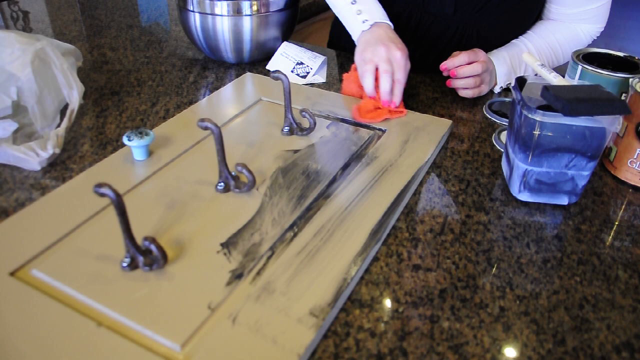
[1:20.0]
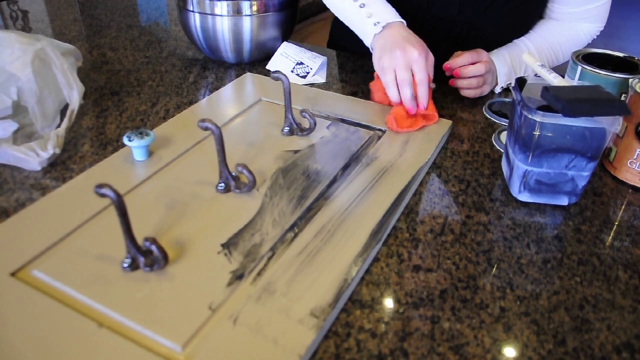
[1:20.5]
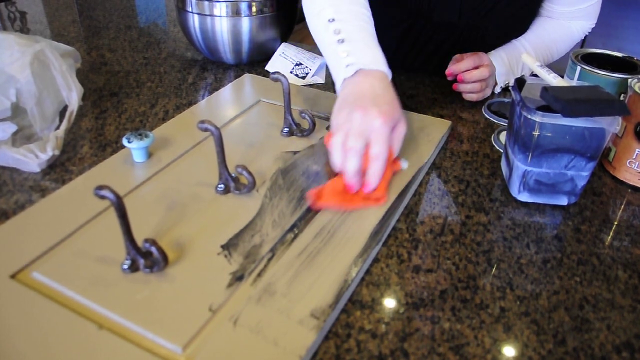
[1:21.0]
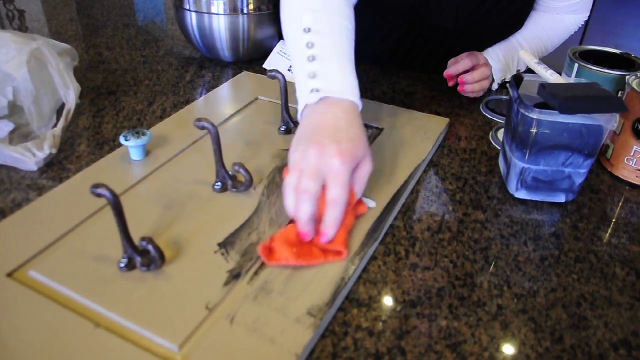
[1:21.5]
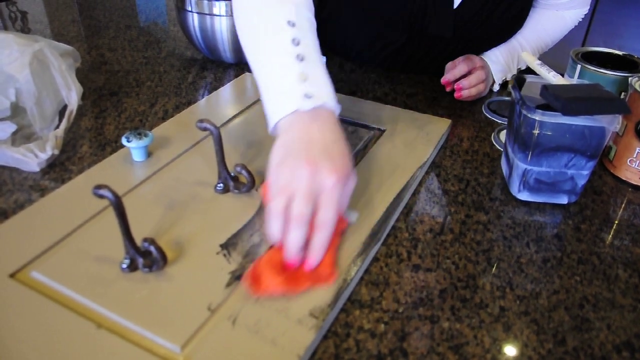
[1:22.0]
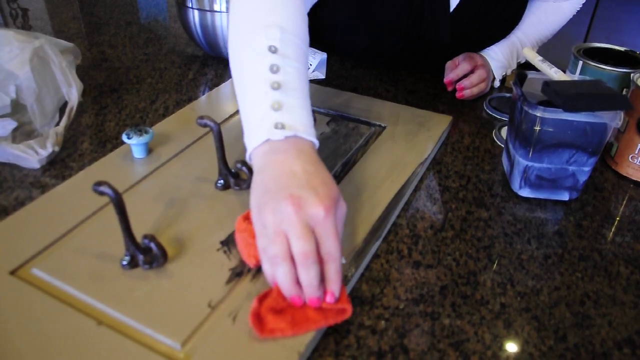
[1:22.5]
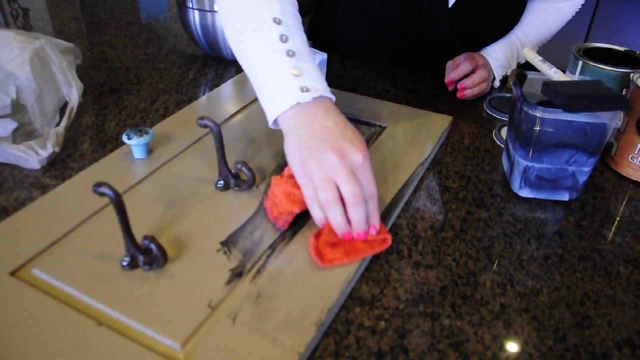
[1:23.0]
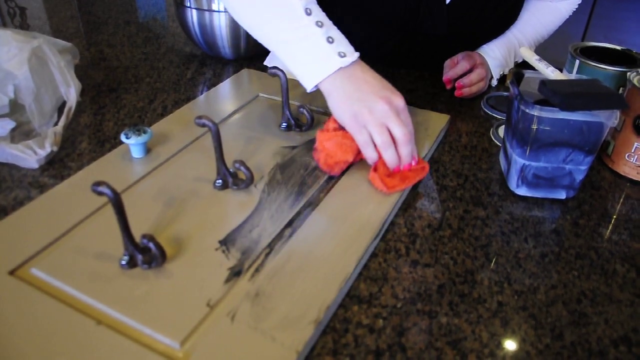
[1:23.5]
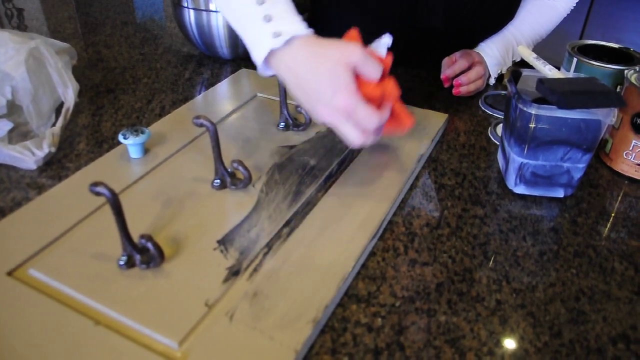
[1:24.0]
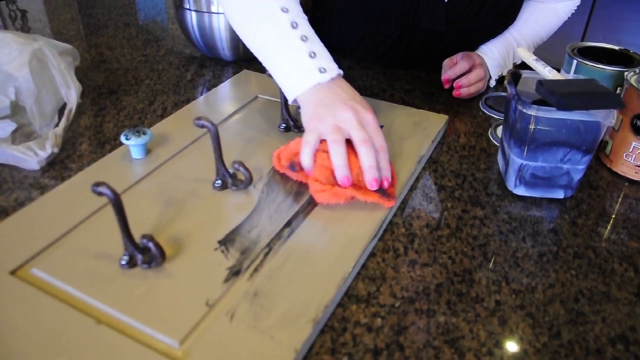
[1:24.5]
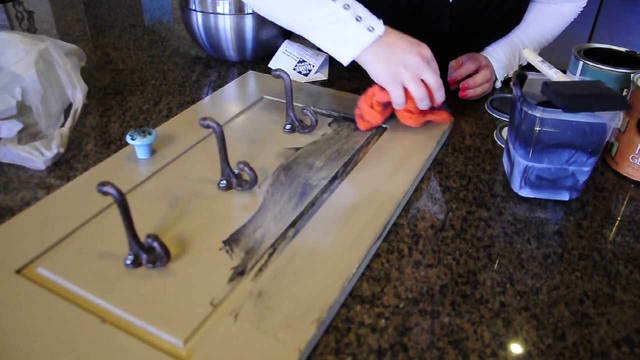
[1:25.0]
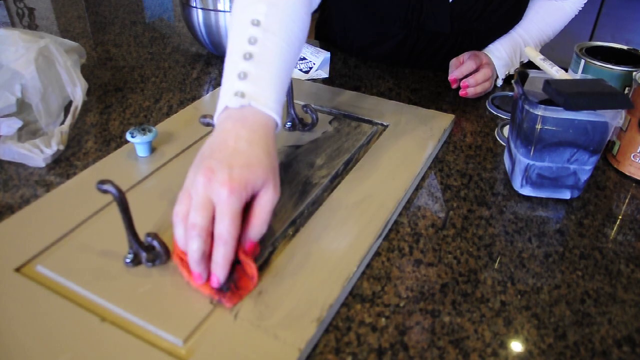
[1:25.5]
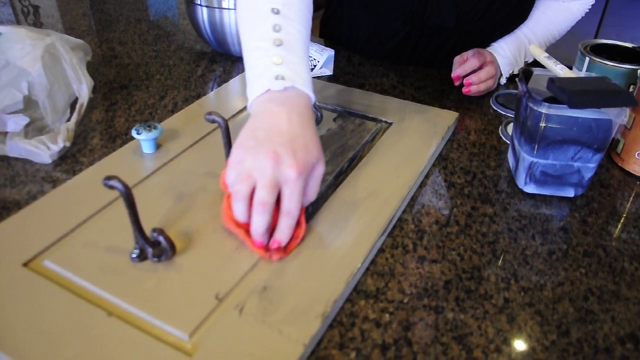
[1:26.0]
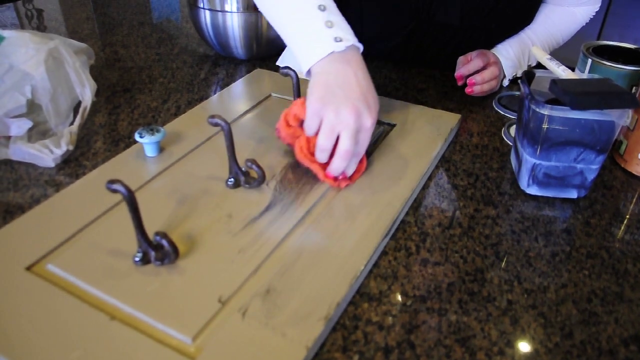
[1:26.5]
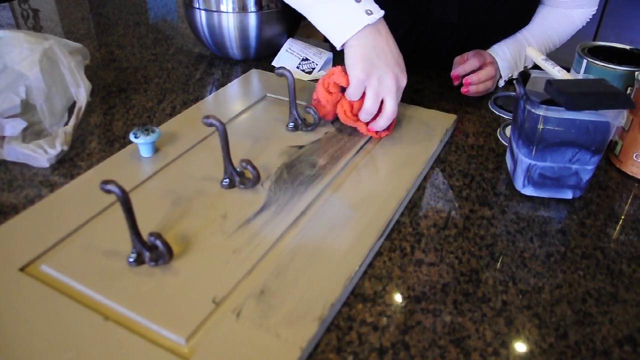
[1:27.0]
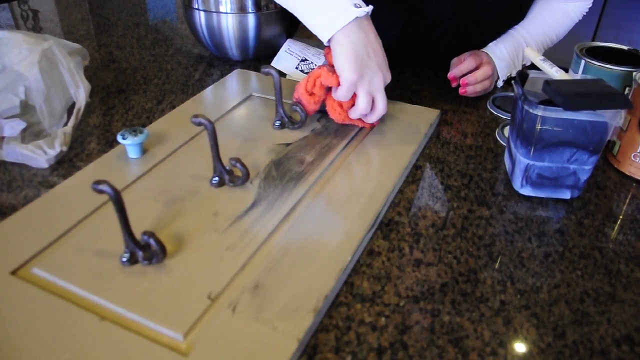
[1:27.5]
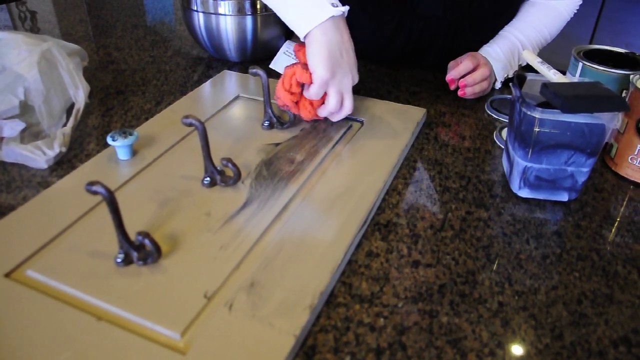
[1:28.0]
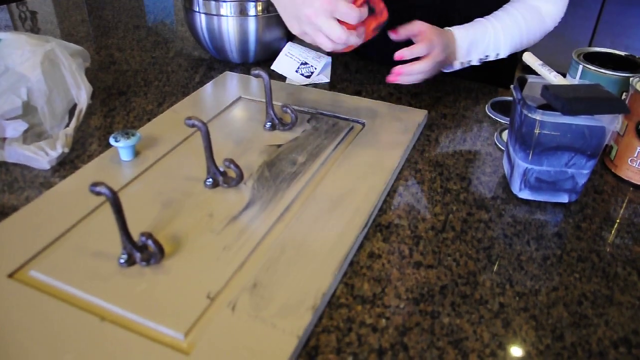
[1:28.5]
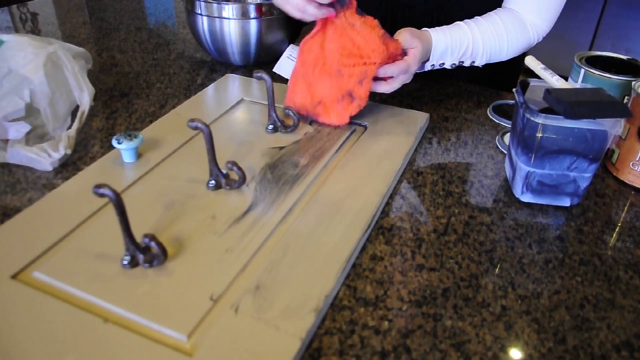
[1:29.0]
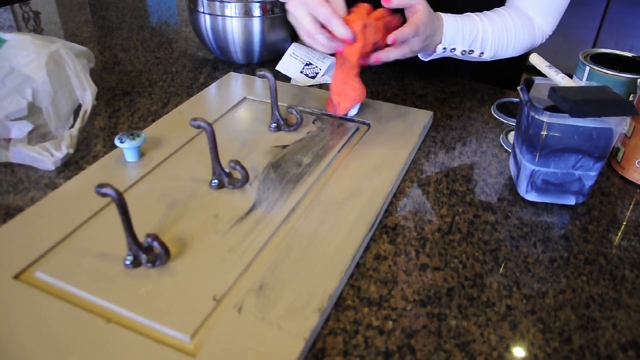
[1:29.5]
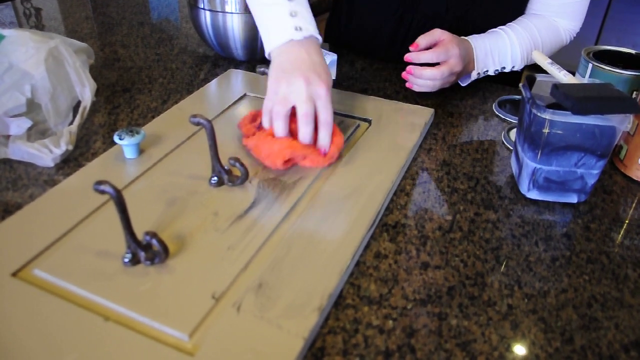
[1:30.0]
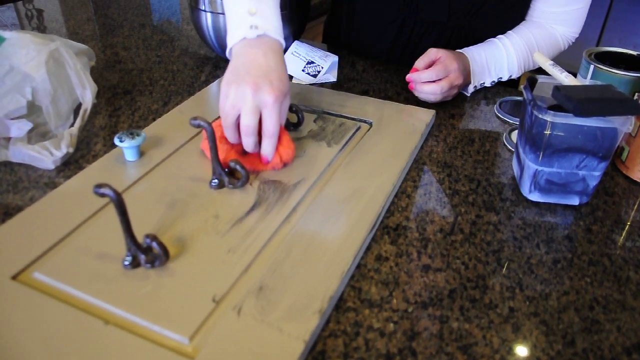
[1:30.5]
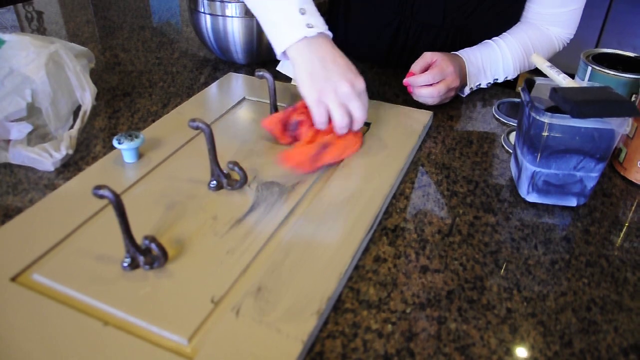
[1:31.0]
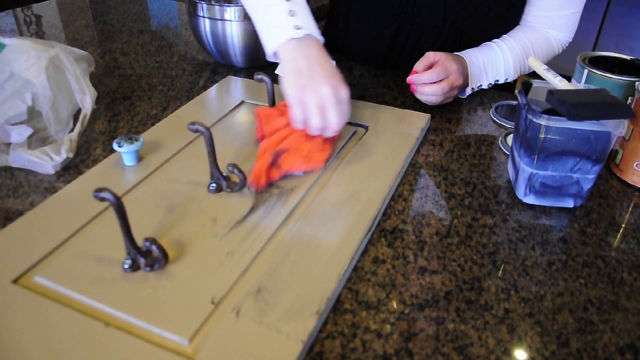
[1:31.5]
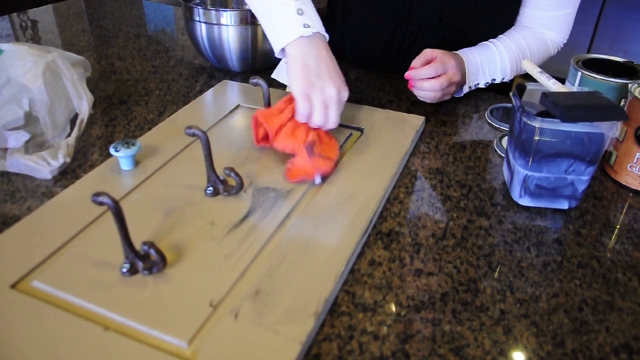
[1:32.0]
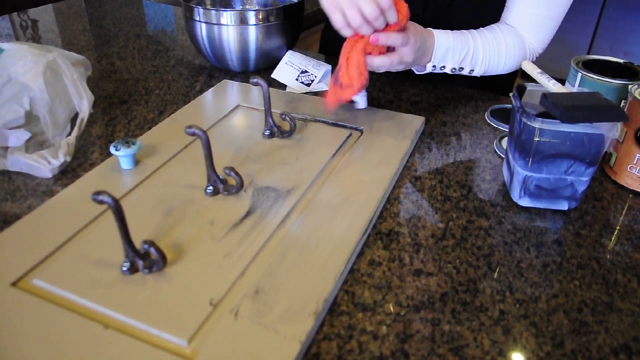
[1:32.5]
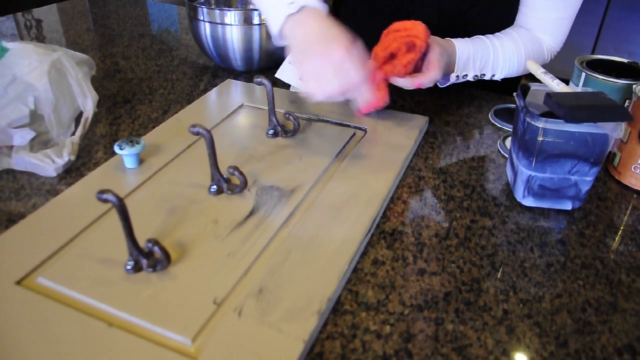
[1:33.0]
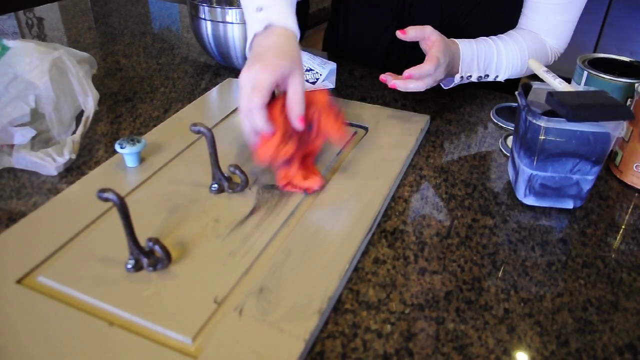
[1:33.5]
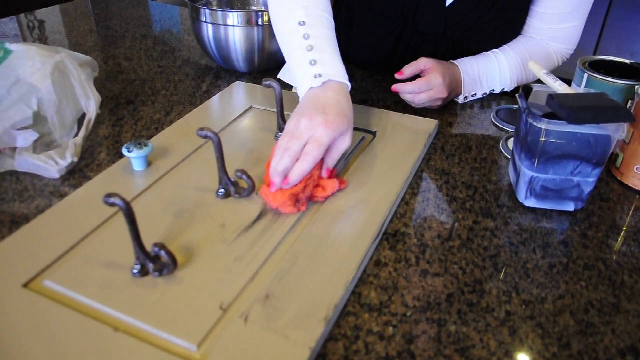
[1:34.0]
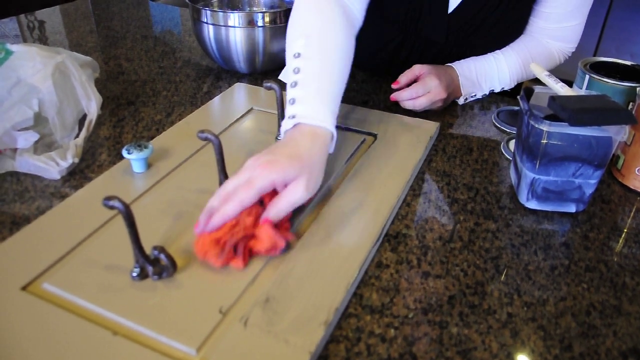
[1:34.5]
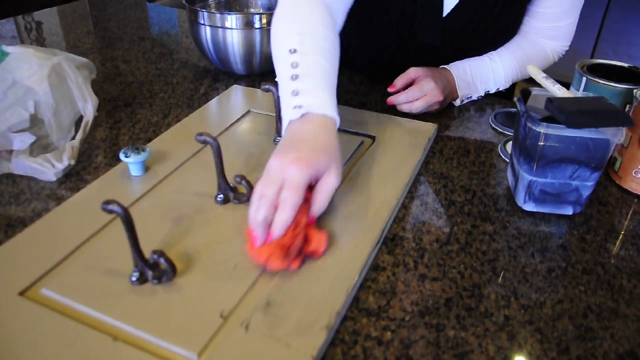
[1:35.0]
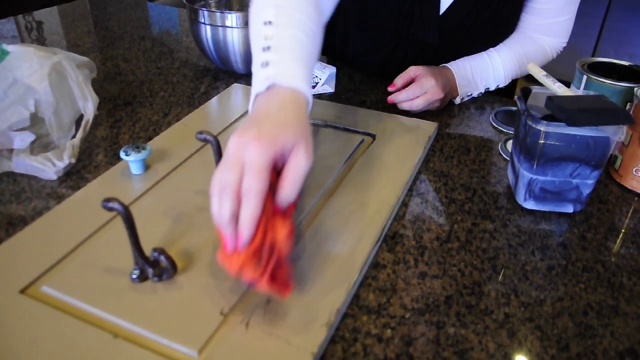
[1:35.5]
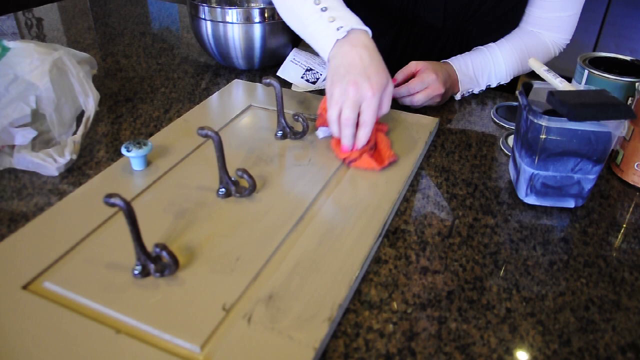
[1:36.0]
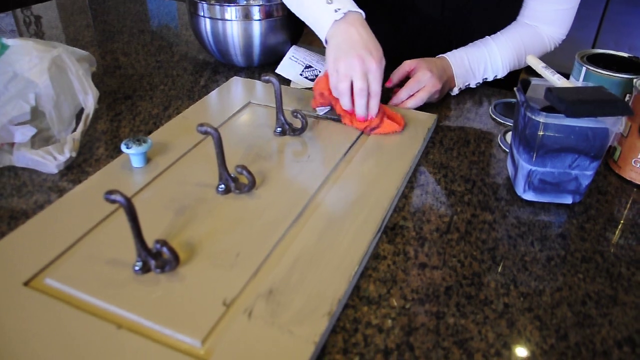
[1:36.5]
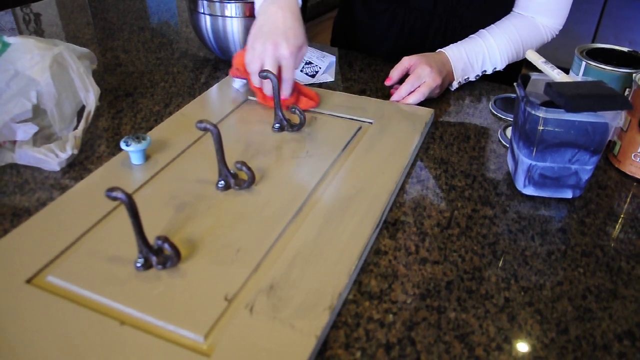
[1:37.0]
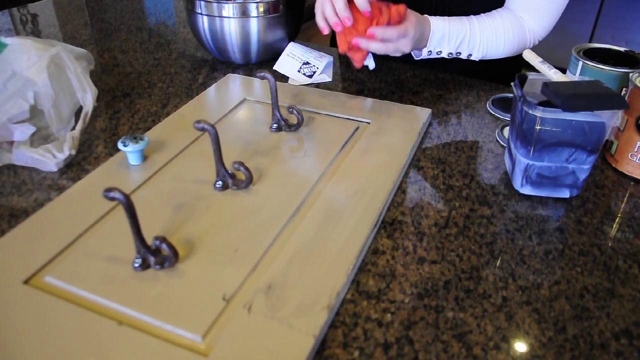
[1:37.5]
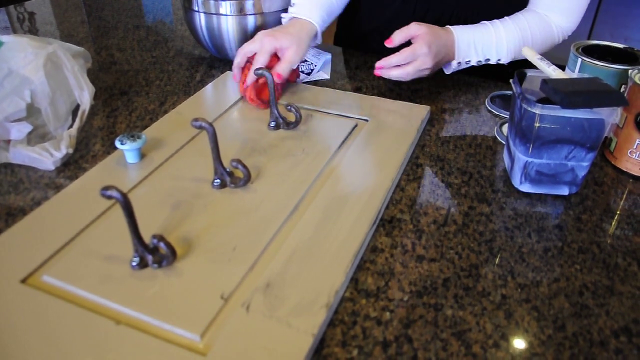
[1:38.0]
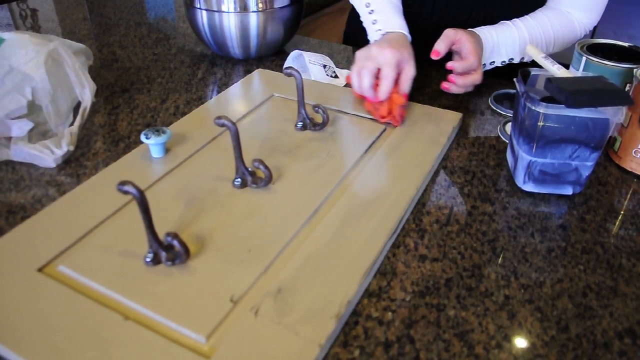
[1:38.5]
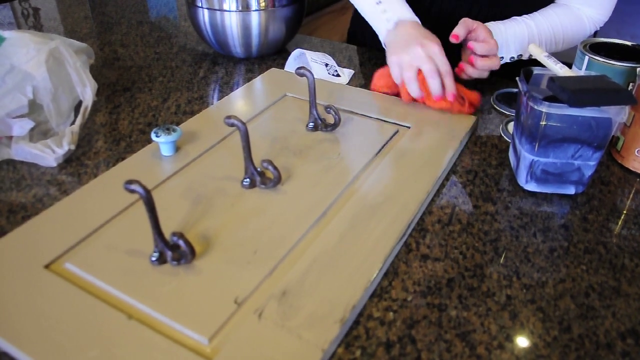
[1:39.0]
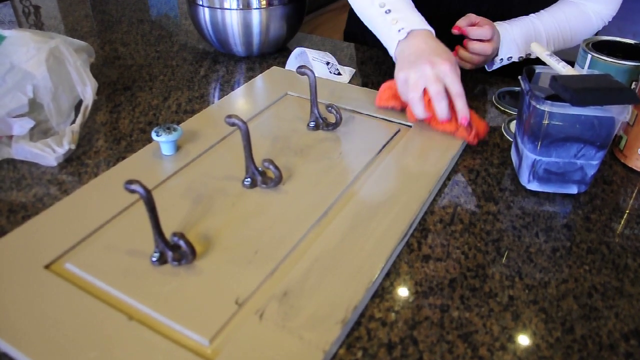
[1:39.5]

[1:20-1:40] In the YouTube video called How to Glaze Furniture, a piece of wood is on a kitchen counter. Only her hands are visible, not her face: her right hand wipes with a cloth the glaze that was previously applied to the upper right corner, and the cloth picks all of it up. In the background is the silver bowl she dipped the red cloth into, and a plastic container with the paintbrush she used to apply the glaze or paint lying on top of it. She wipes into the groove that runs all the way around the set of three hooks in the center. At one point she rests her left hand on the counter while wiping with her right hand.